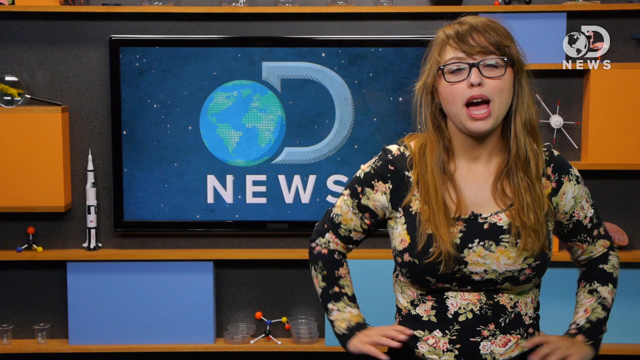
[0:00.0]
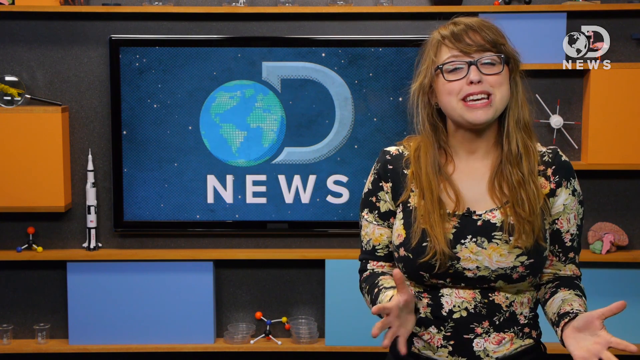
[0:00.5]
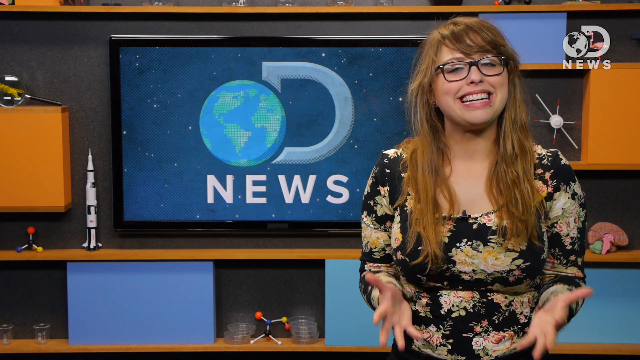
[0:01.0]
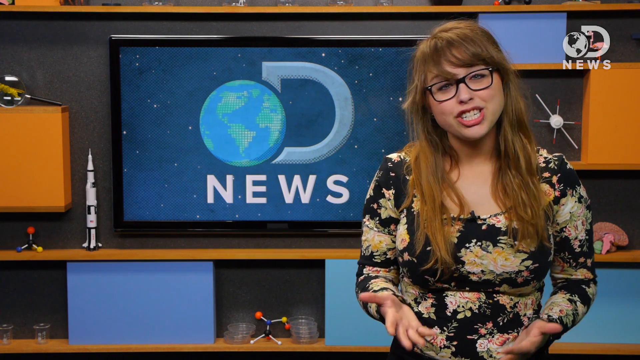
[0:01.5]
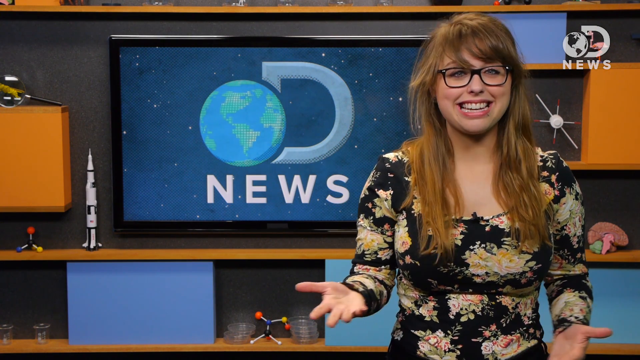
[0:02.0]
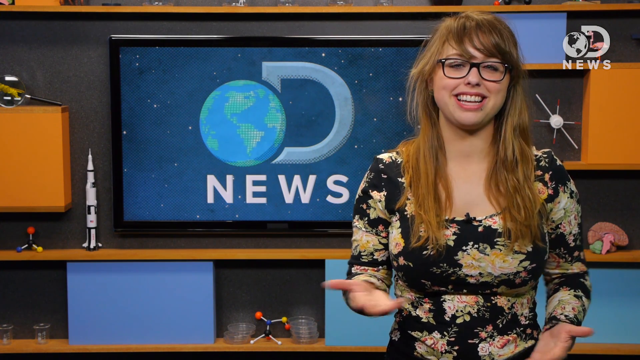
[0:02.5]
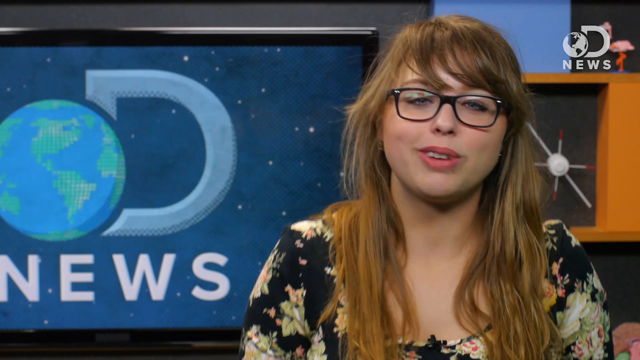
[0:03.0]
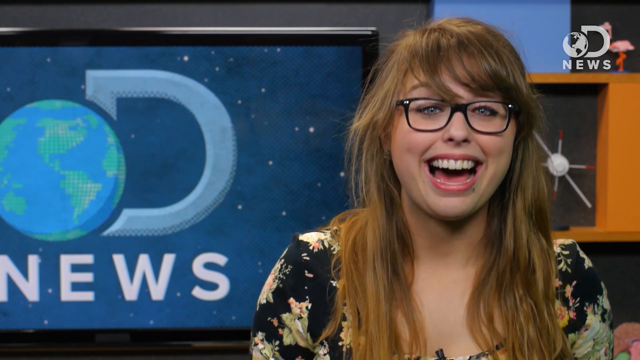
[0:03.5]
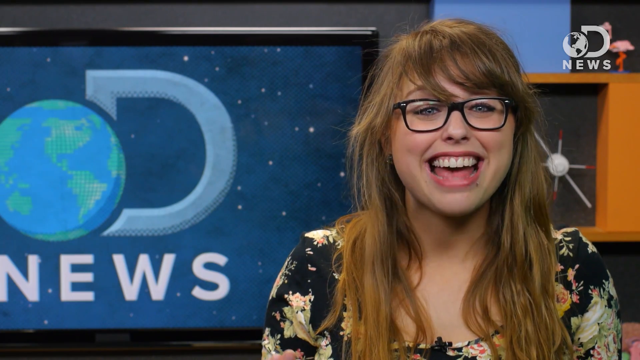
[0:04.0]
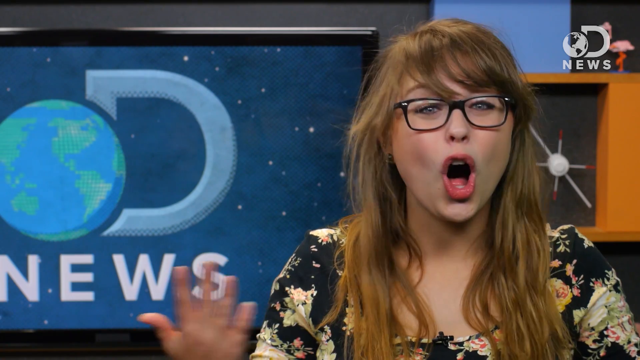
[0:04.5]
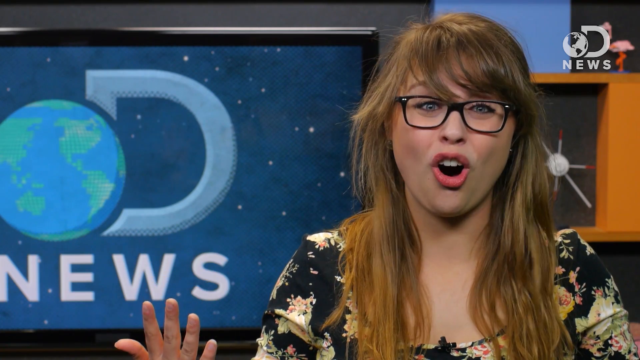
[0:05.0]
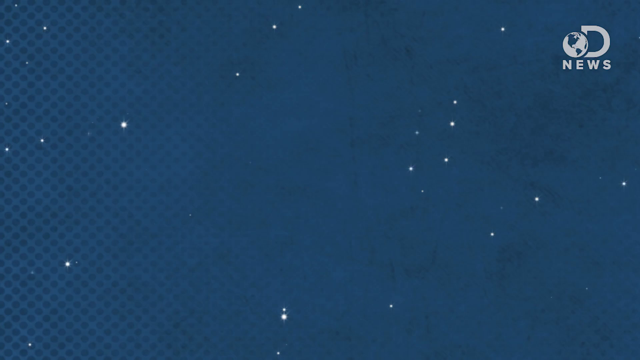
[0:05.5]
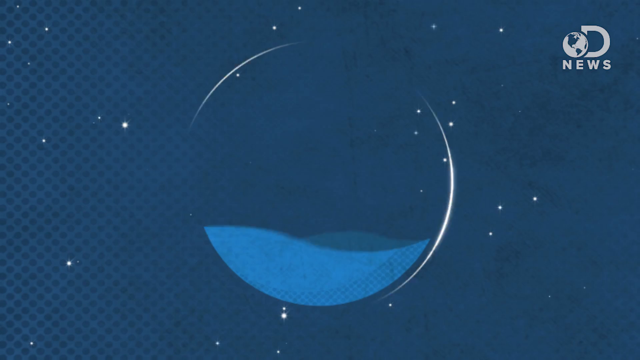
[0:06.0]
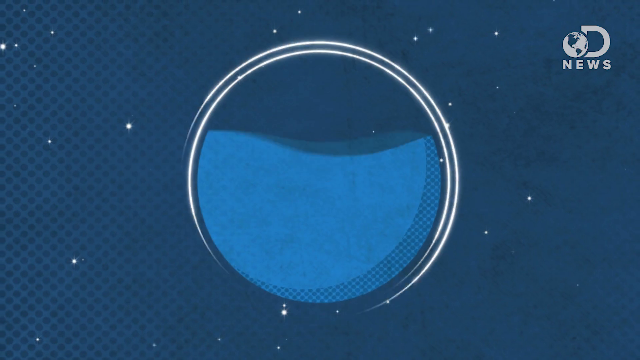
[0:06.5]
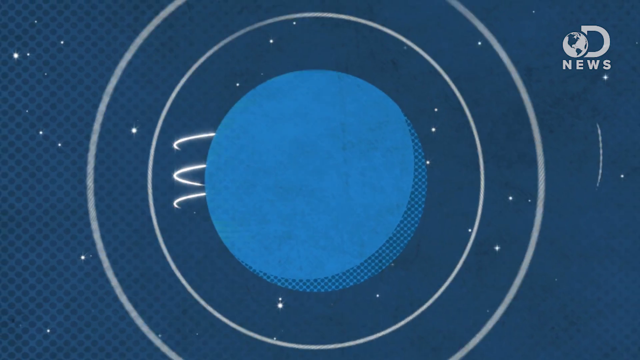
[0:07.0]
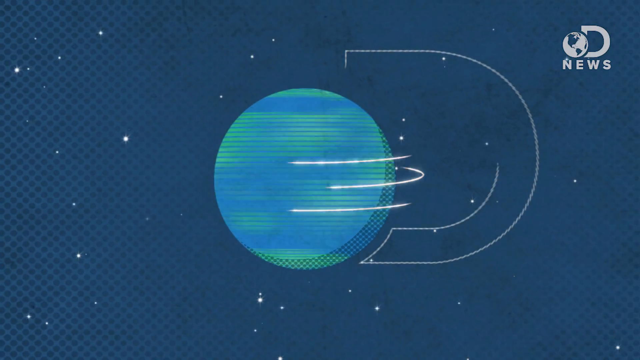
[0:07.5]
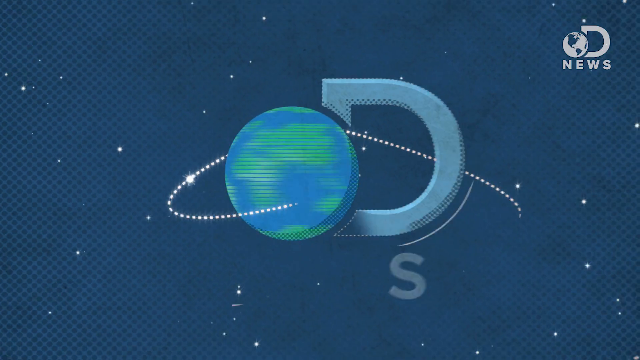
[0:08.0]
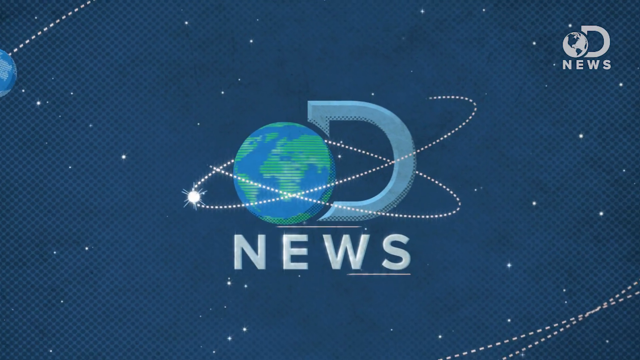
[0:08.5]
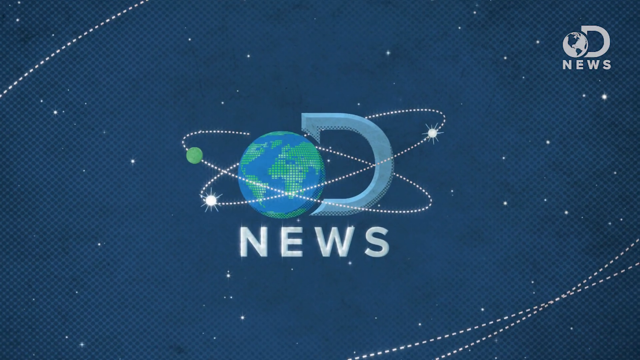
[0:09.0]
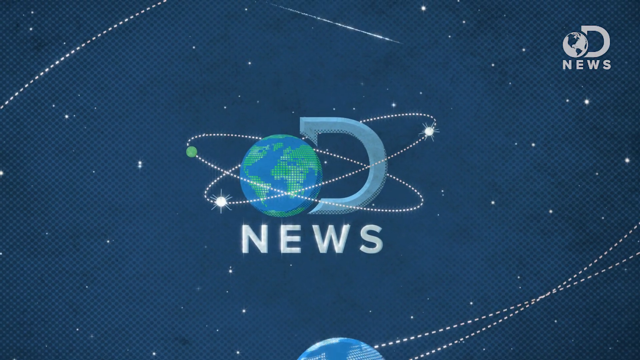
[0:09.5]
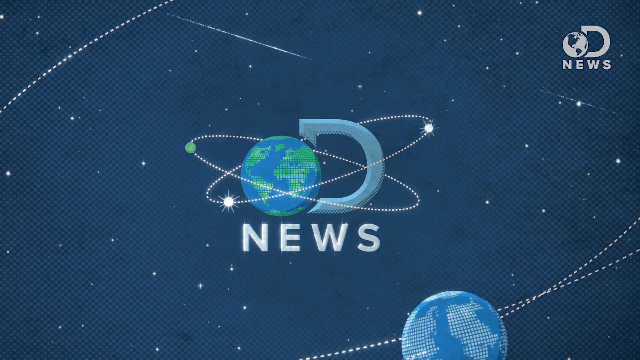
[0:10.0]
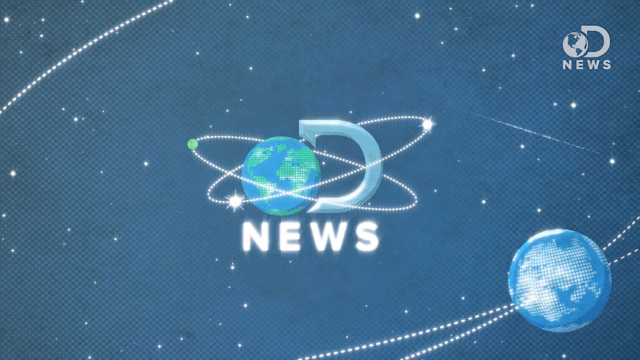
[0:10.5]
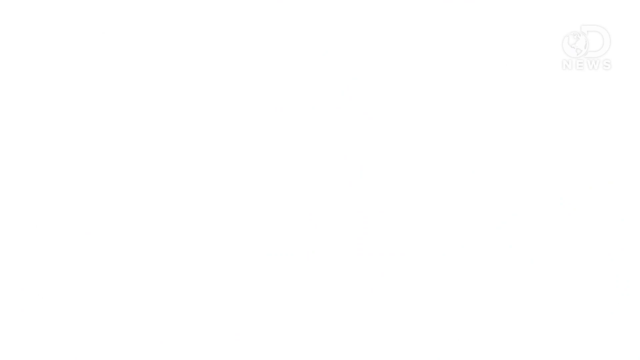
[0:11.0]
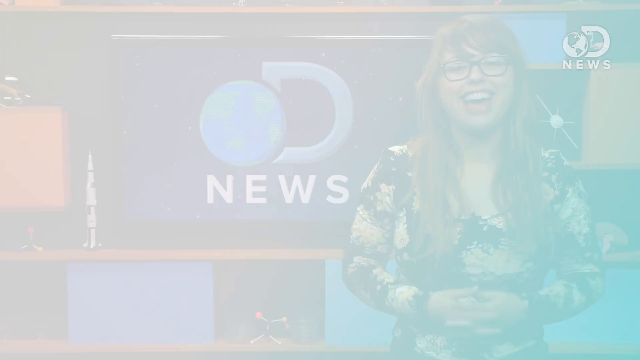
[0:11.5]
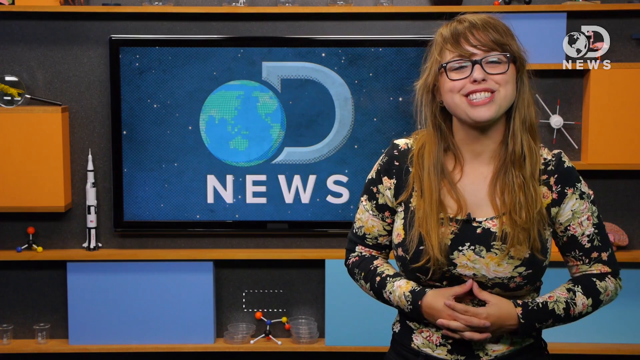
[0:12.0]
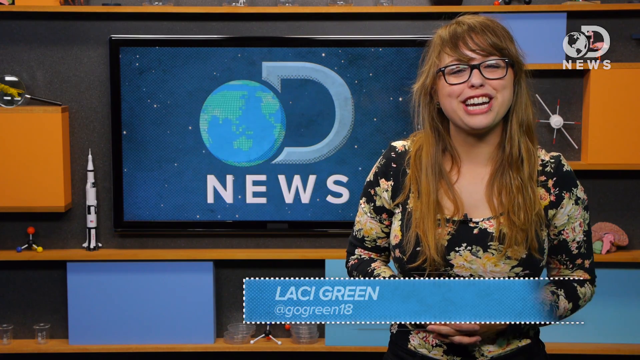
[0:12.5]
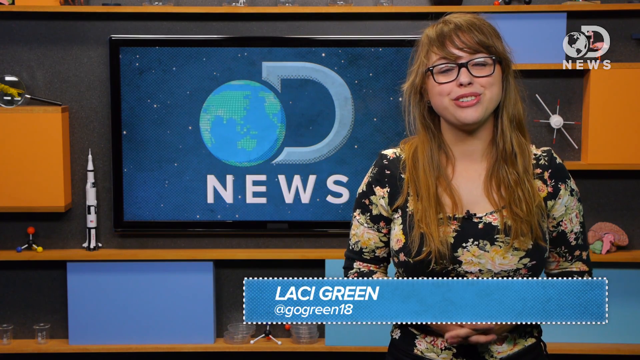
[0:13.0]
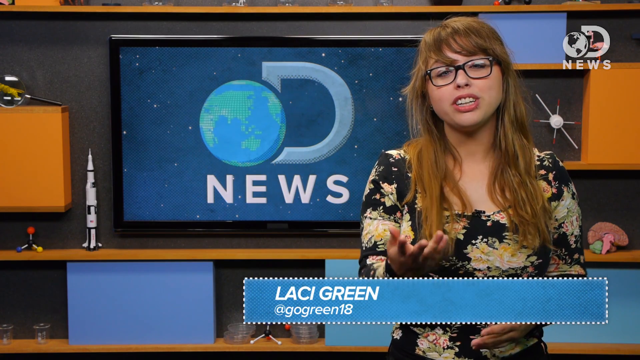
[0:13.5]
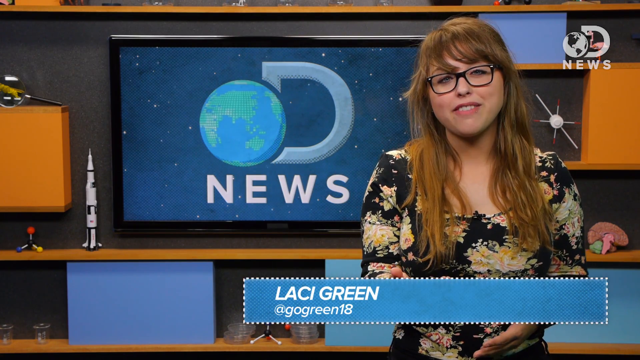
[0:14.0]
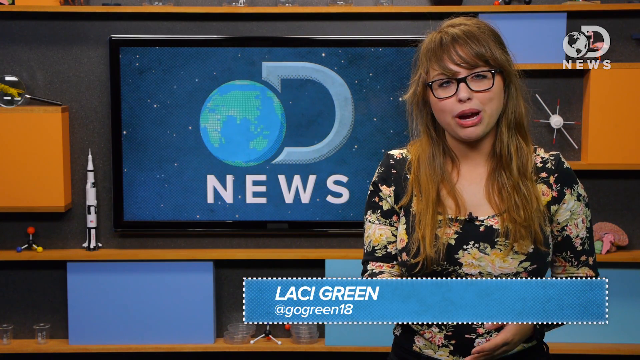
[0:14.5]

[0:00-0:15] A woman is inside what appears to be a studio. She has what appears to be long hair, possibly a reddish brunette color, and wears a black dress covered in very white flower shapes. Behind her is a large television showing the letter D; next to the D is a blue and green earth image and the word "news" in white text. Around the television are several orange and green block shapes, a spaceship, and what appears to be a strand of DNA. The woman is talking, and a close-up shows she also wears black glasses. The next scene is a small animated image of the same D with the earth, with planets going all around the D and the earth; one of the planets is green, and there are two large white circles with lines across them, possibly large stars. The video returns to the woman, and her name, "Lacey Green", appears with an @ symbol, apparently her social media, along with "Go Green 18". The text is white on a rectangular blue background toward the bottom right of the screen. At the very bottom right of the screen is what appears to be a fake brain figure.